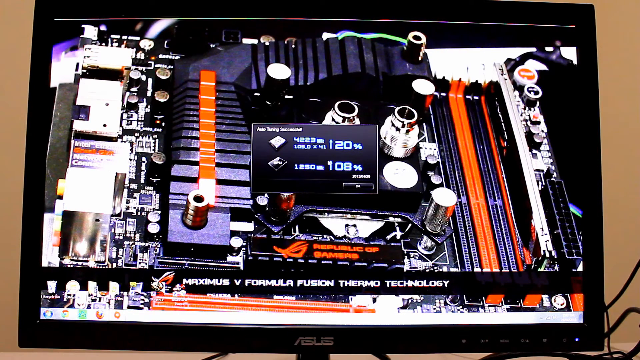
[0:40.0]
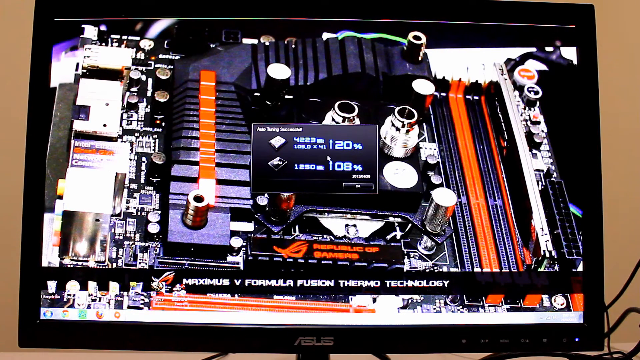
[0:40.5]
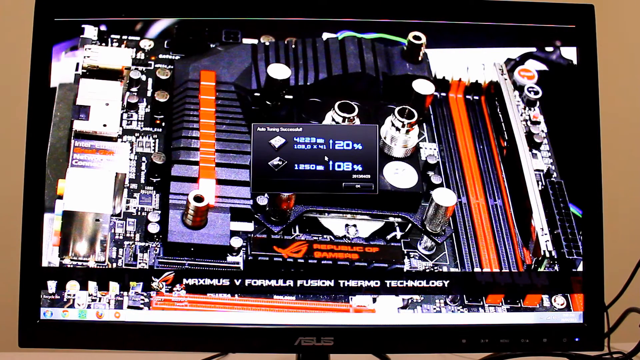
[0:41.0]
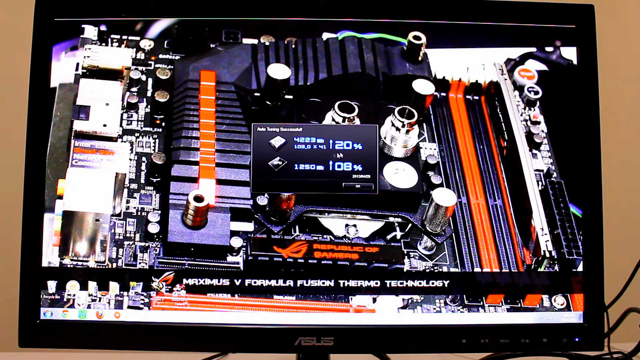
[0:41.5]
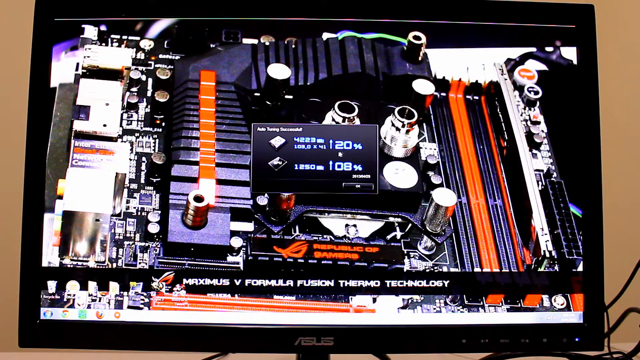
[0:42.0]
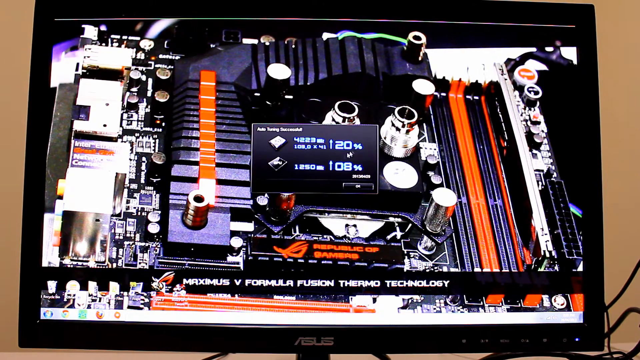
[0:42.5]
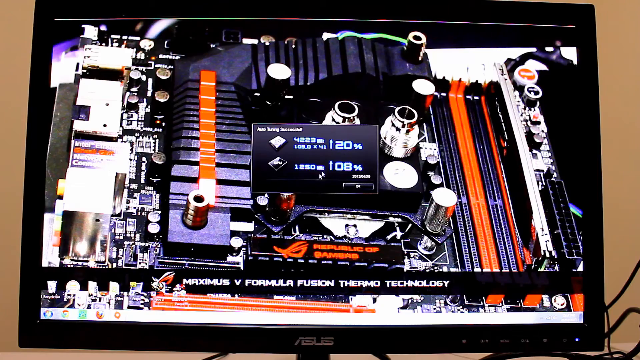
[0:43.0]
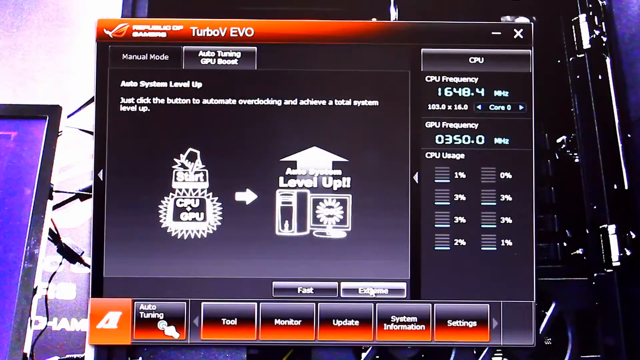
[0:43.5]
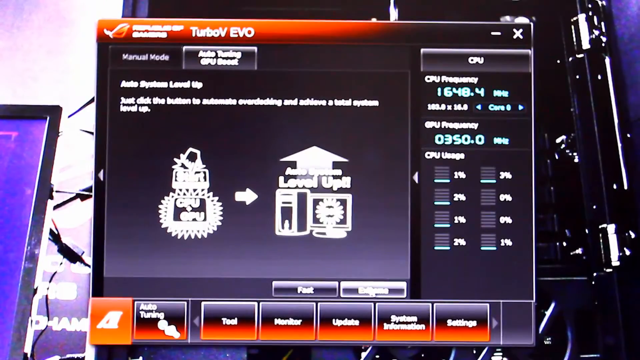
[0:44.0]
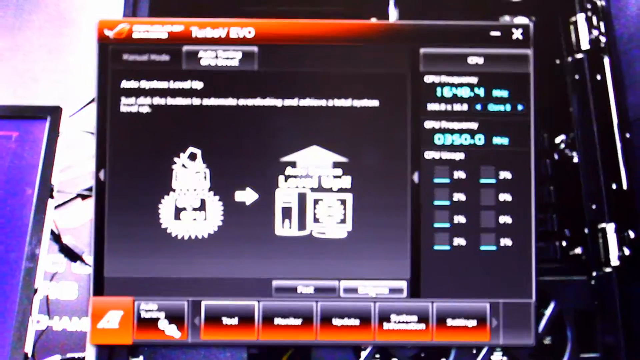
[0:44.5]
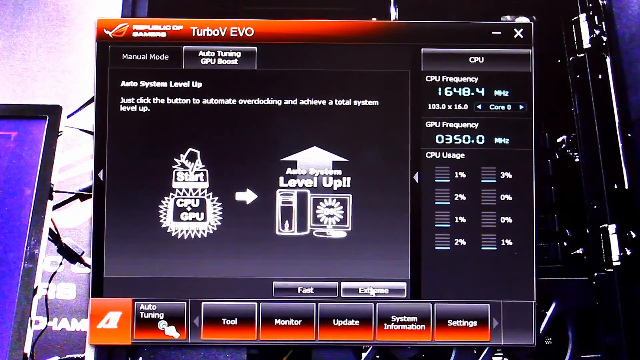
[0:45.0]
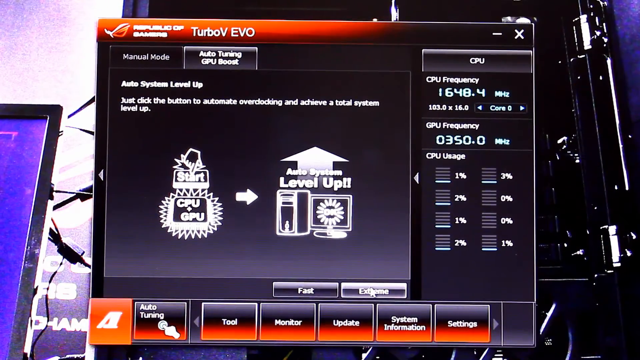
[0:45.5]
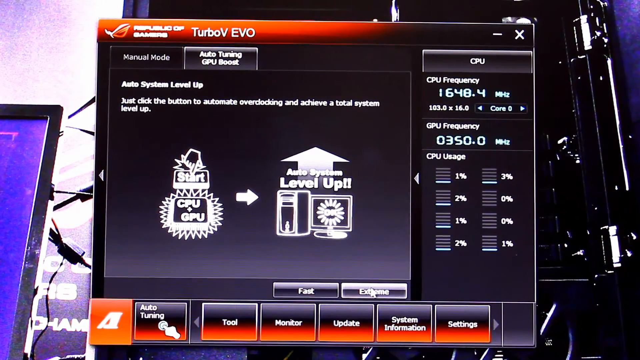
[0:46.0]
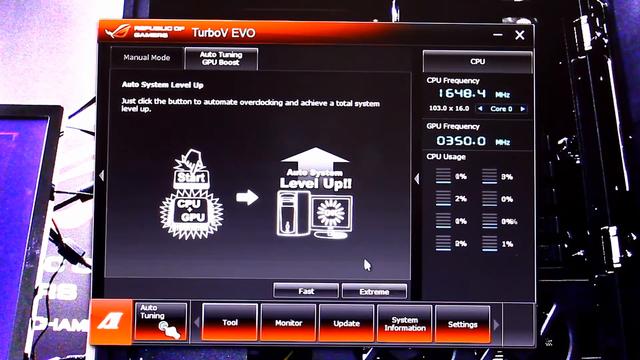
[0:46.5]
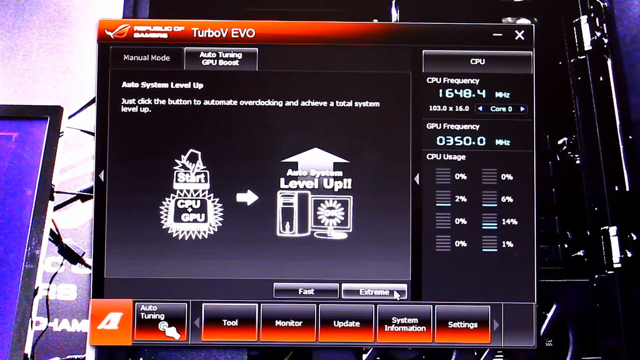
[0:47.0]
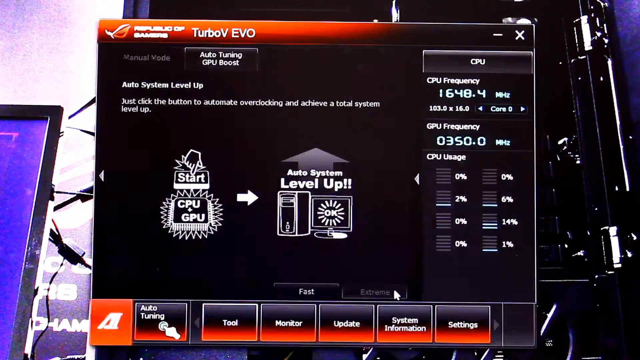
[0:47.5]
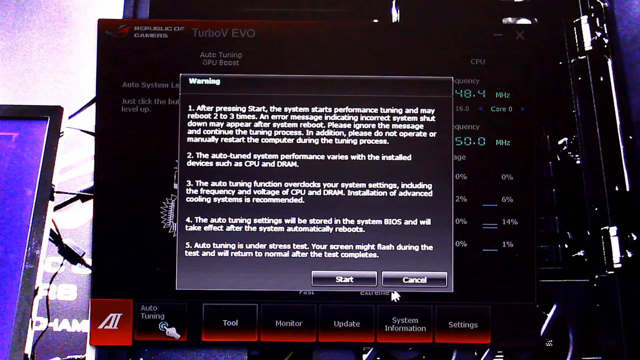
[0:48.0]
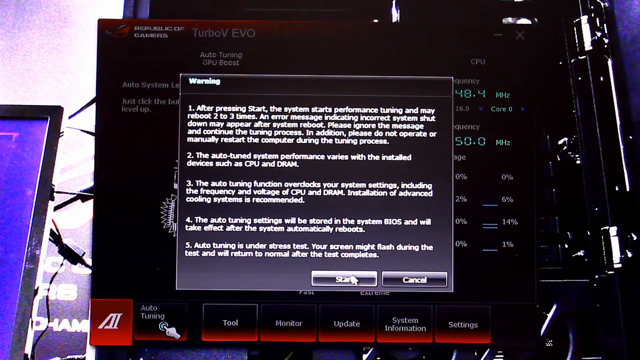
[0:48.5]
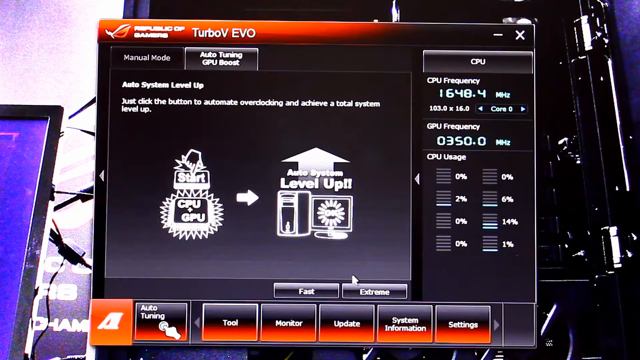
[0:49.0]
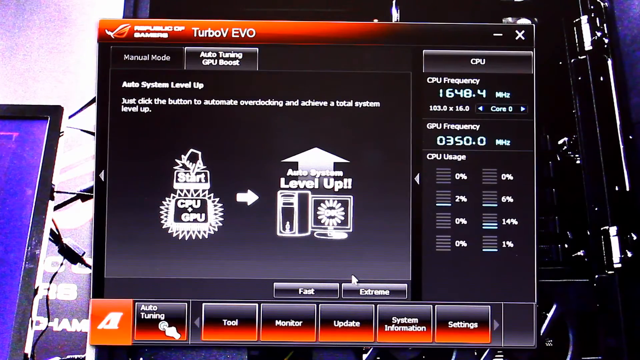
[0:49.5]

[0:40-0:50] The program is still small, and the wallpaper still shows the inside of a computer. The scene then changes back to the program at a bigger size, showing CPU frequency and GPU frequency. This time the mouse hovers over the extreme option rather than the fast option, then clicks to start the program. An error message appears, warning about what could happen to the computer if the program is started, such as the computer restarting and being overstressed by the amount of usage.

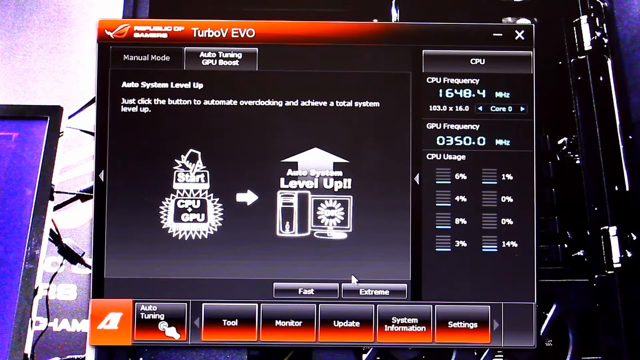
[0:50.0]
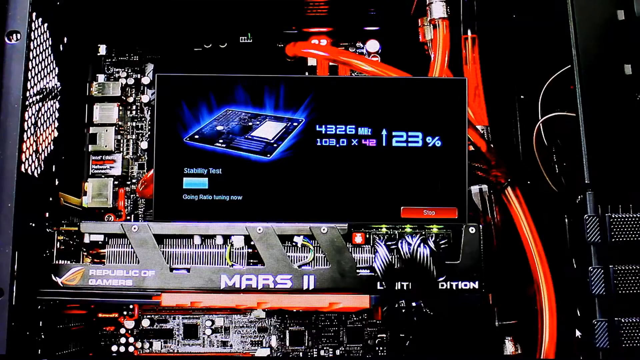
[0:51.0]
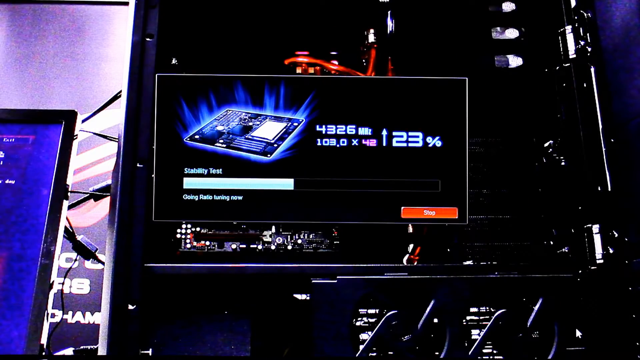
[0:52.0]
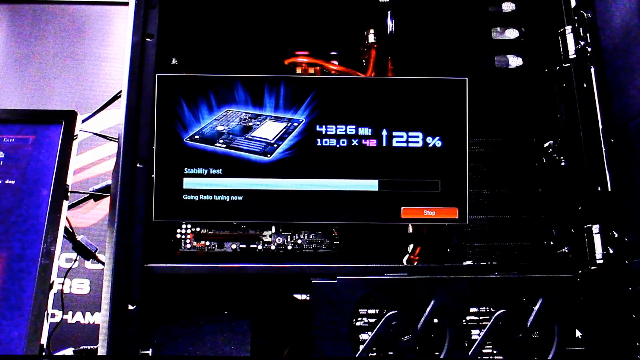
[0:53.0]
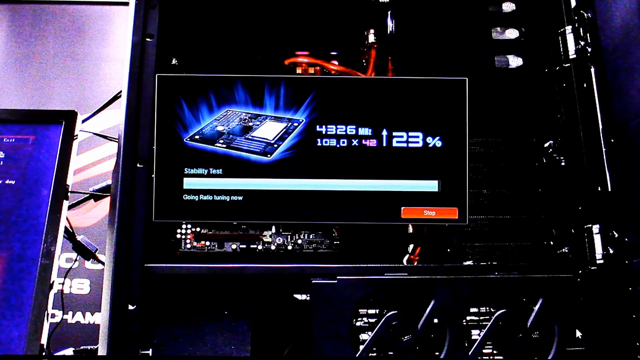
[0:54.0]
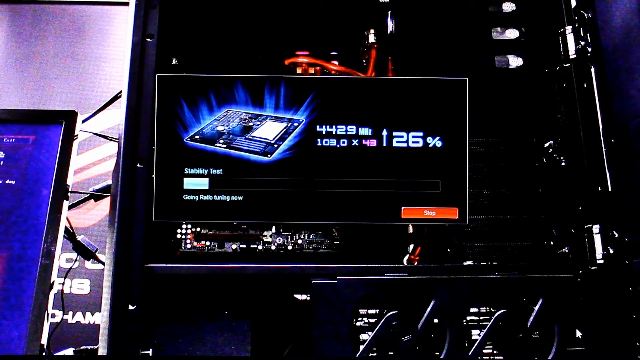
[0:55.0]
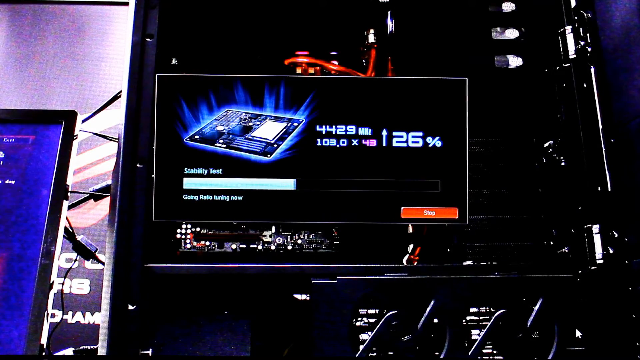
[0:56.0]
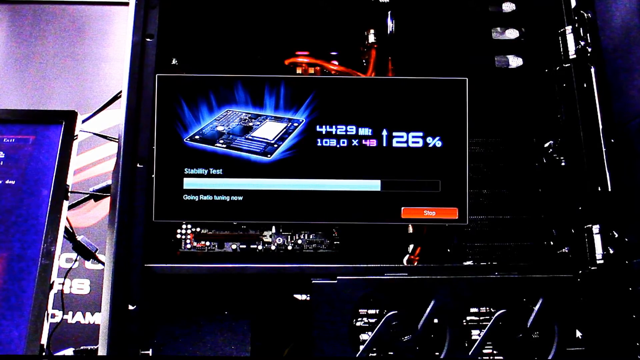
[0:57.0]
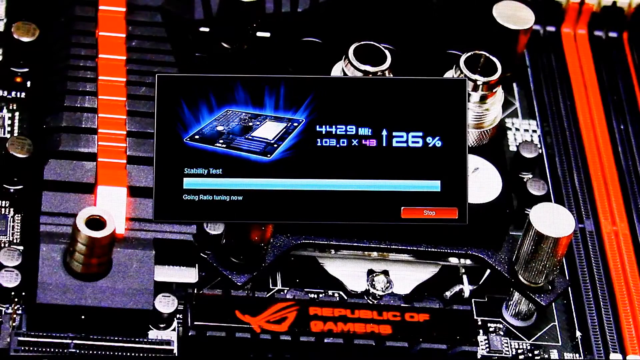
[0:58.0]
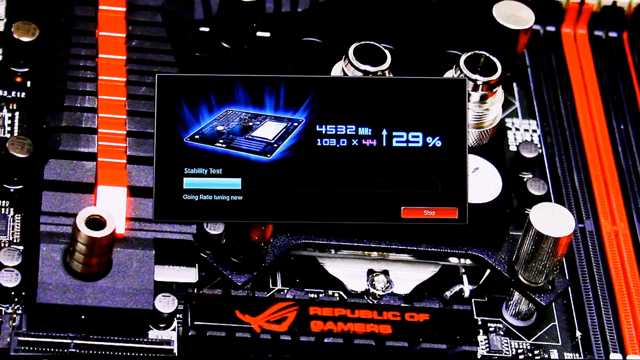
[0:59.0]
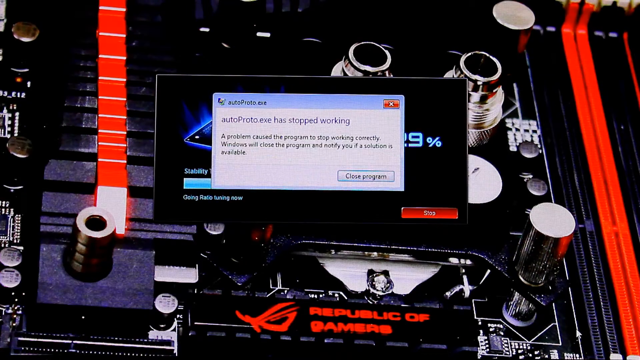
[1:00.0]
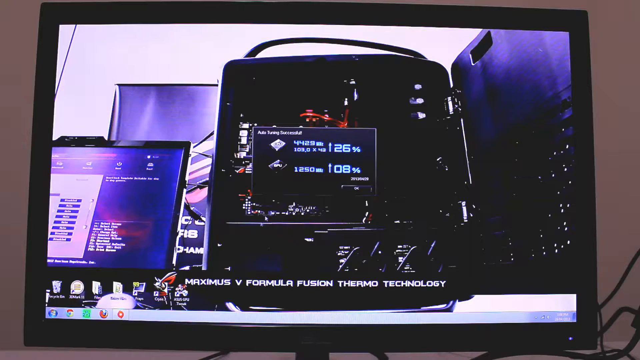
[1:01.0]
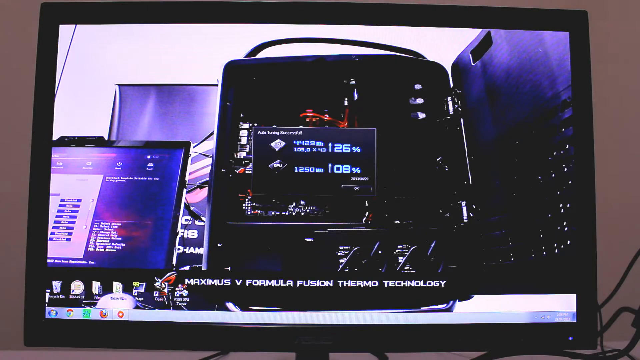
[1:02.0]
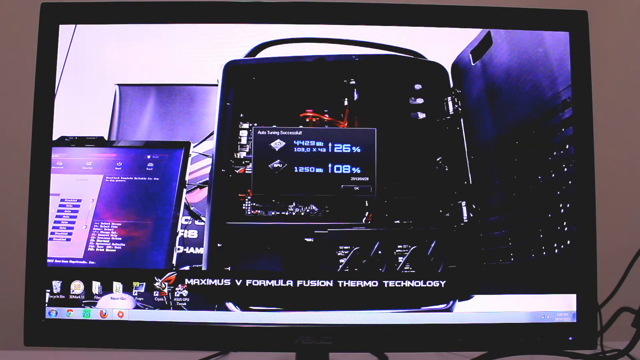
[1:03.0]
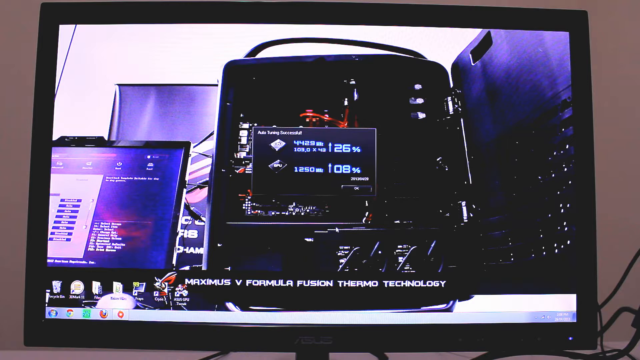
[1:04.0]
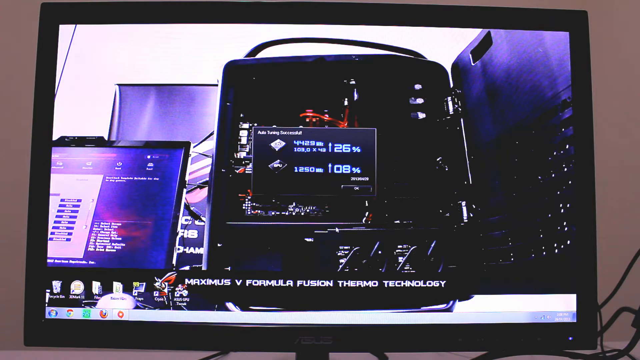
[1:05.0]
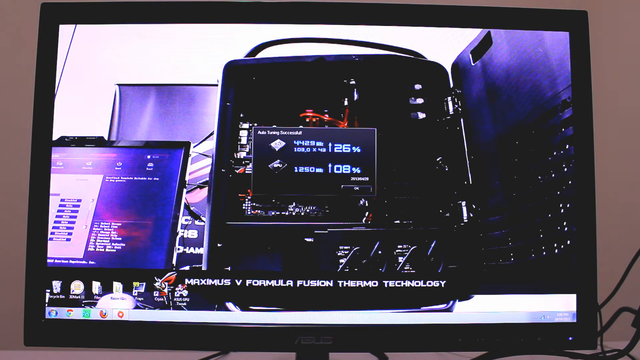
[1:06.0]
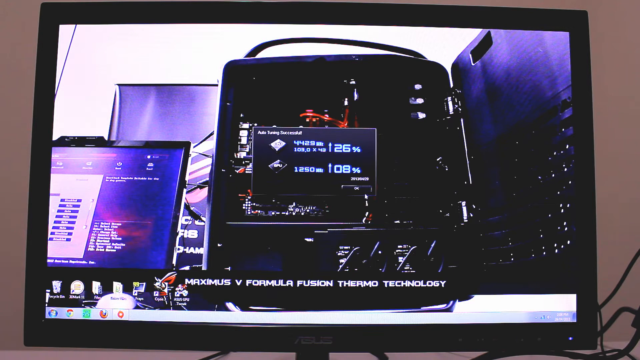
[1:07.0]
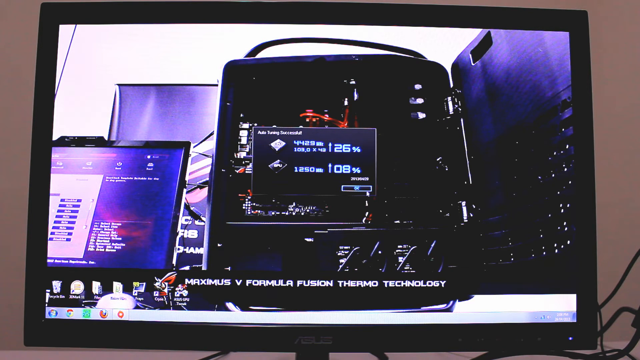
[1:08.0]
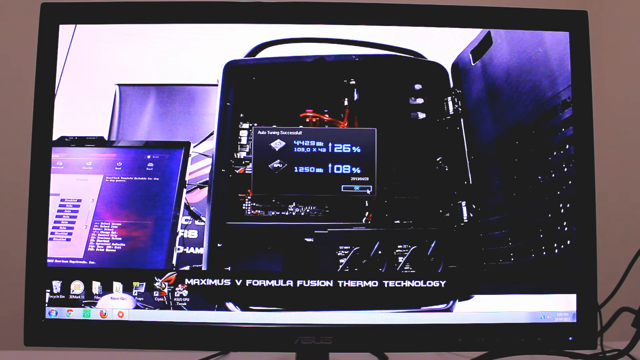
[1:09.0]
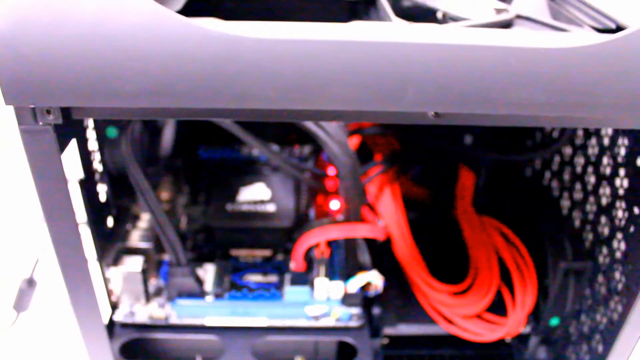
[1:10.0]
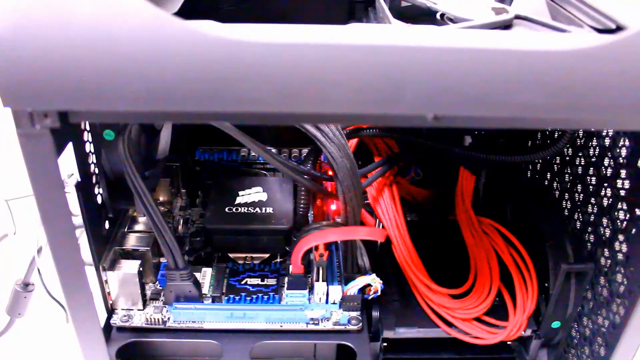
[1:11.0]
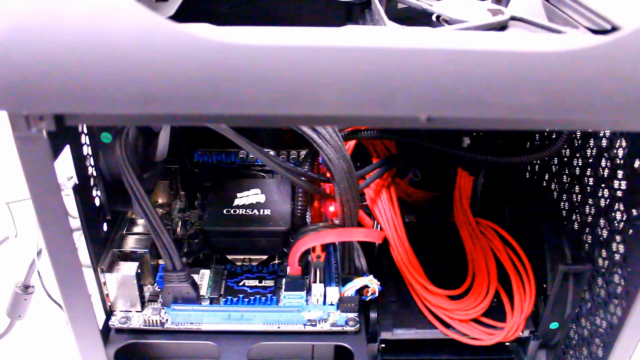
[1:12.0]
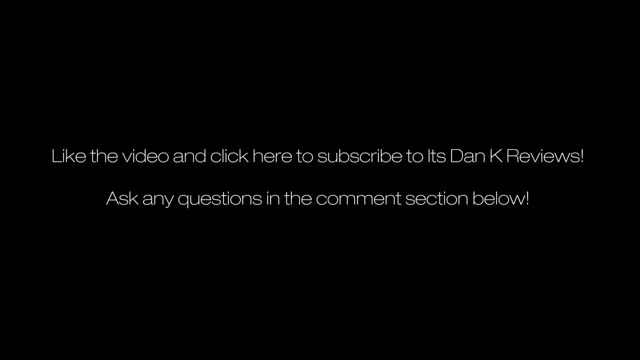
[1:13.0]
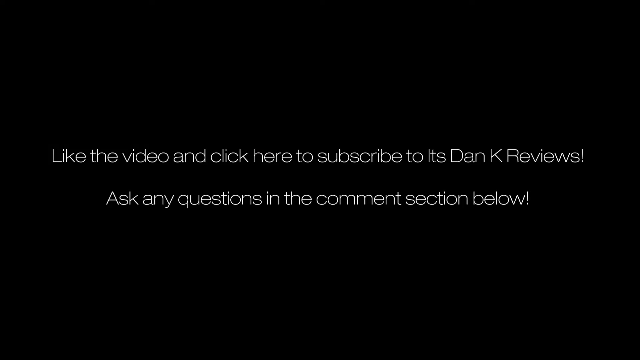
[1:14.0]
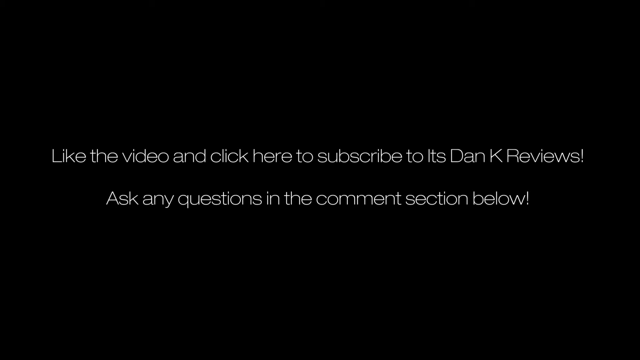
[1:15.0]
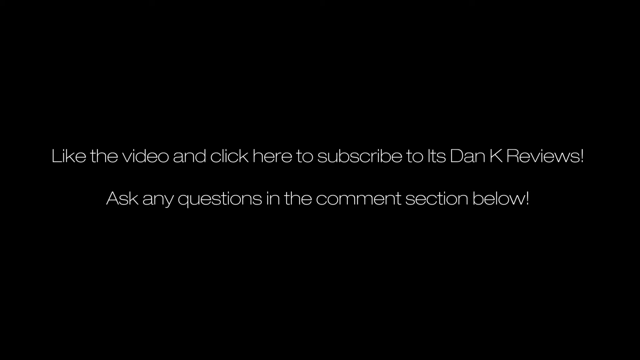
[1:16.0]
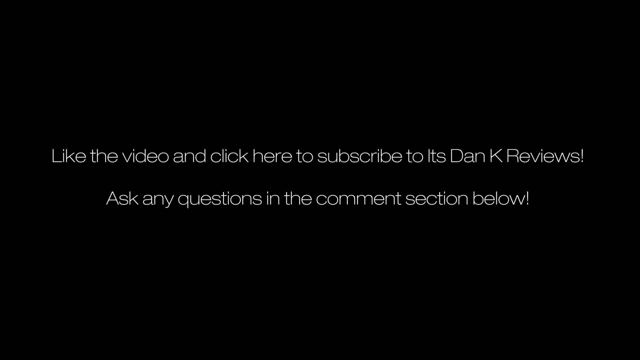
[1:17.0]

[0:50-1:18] The program is open with the wallpaper of the inside of a computer still in the background, and the view switches to the program being used. It moves to another section of the program showing a stability test, with a blue bar moving across to show when the test will be done and a percentage in the top right. The percentage goes from 23% to 29%, but once it reaches 29% the program stops working and has to be closed. An error message pops up, and the mouse hovers over it and clicks close program. The video goes back to footage of the computer screen itself with the program in use, and the program is turned off. After that there is a close-up view of the inside of the computer being used. At the end, white text on a black background reads words including "click here to subscribe to It's Dan K Reviews! Ask any questions in the comment section below!"